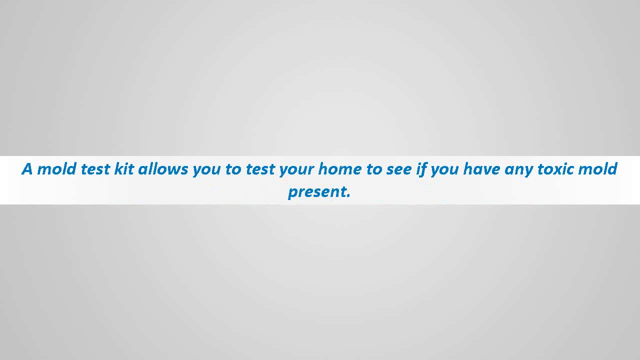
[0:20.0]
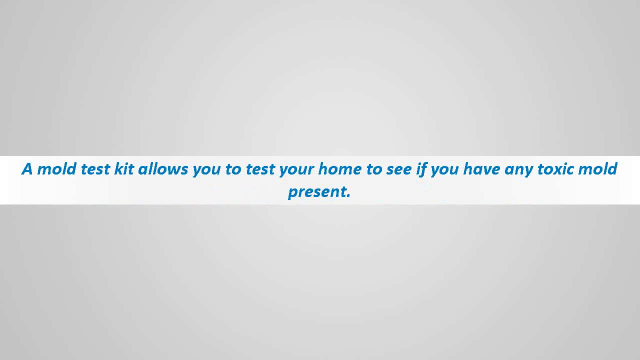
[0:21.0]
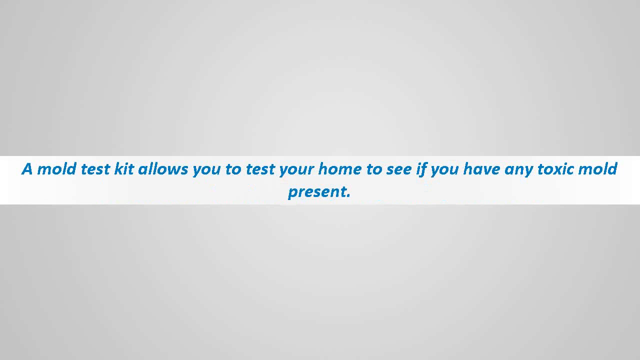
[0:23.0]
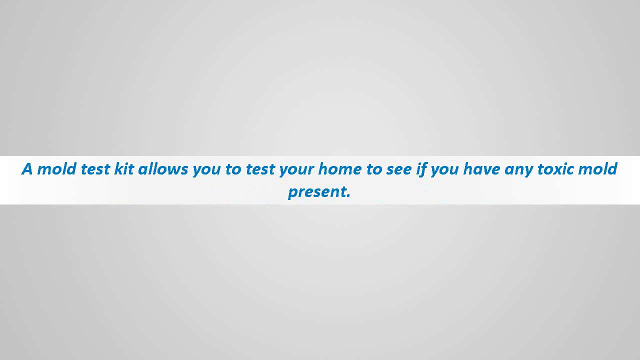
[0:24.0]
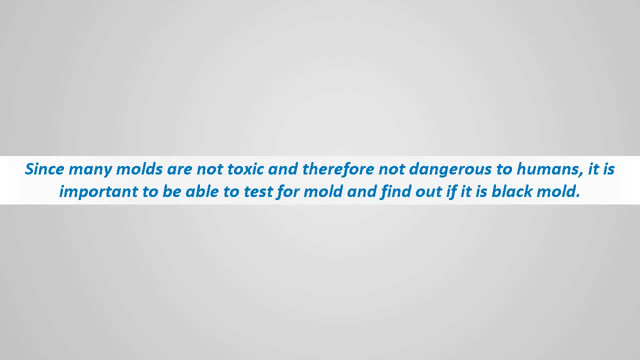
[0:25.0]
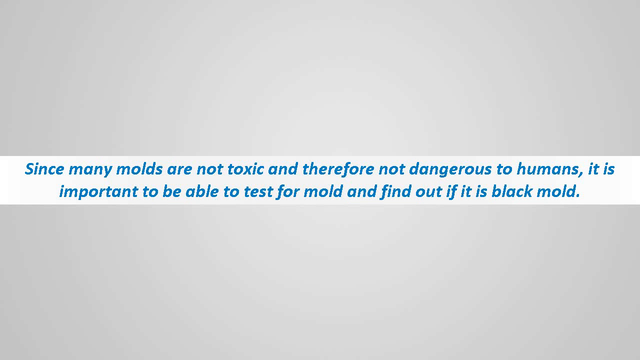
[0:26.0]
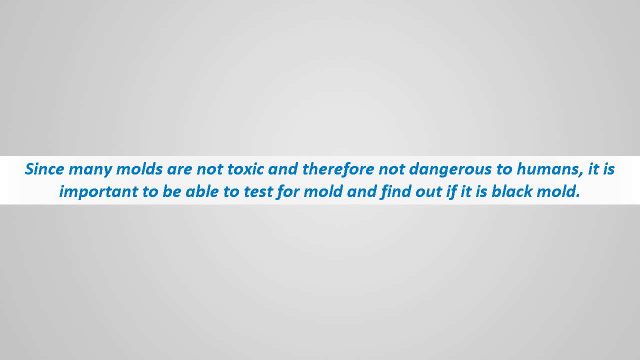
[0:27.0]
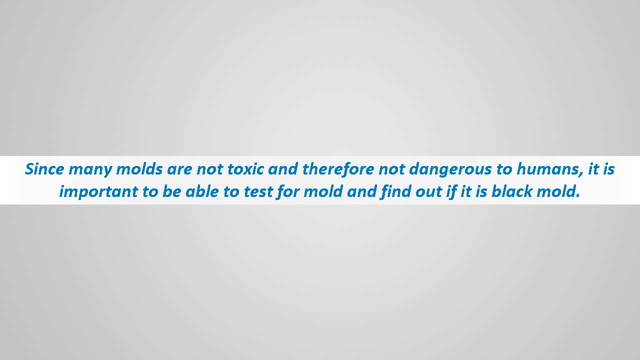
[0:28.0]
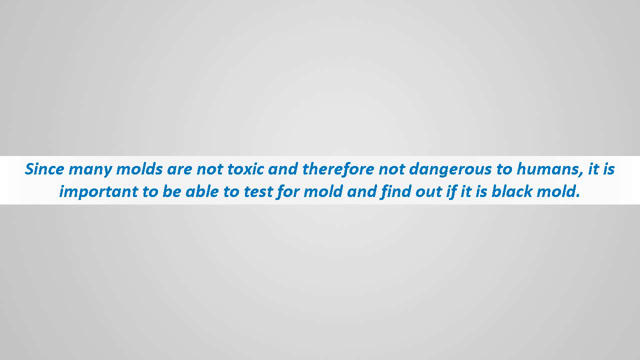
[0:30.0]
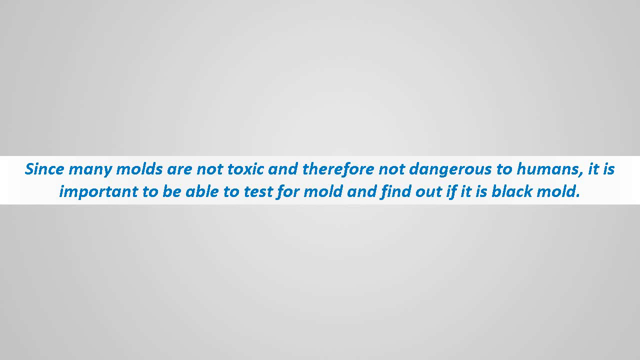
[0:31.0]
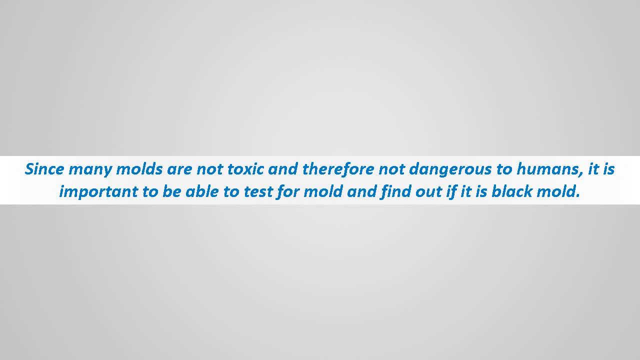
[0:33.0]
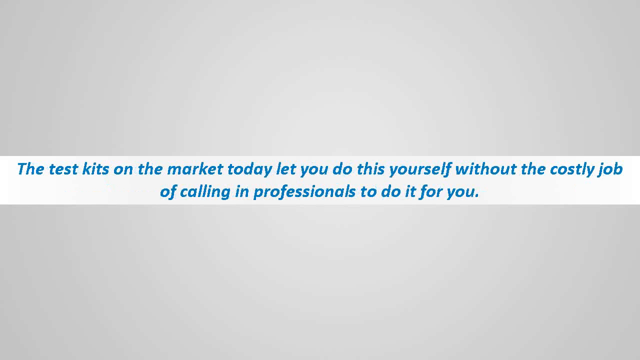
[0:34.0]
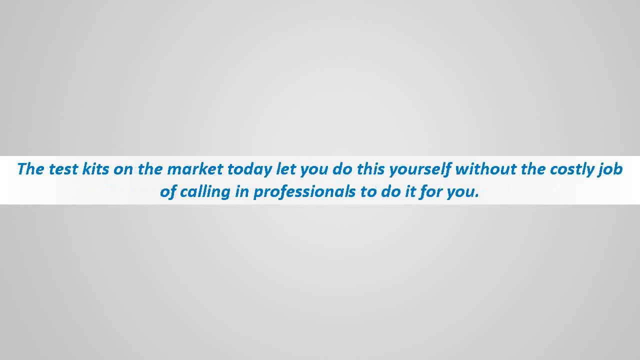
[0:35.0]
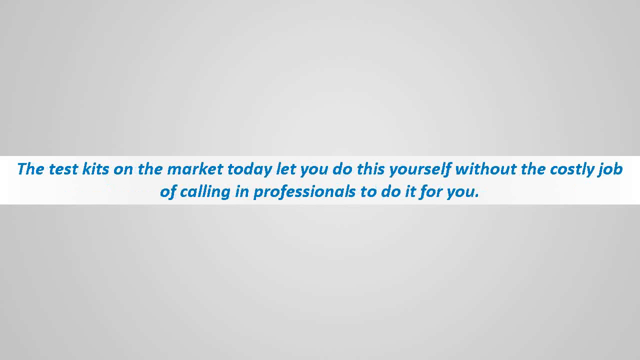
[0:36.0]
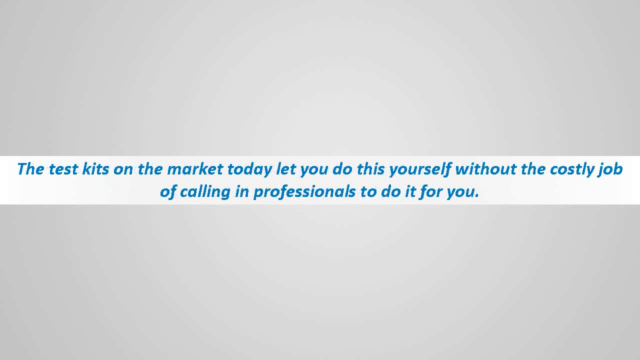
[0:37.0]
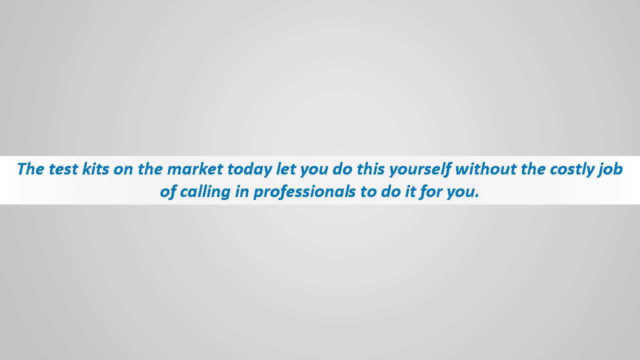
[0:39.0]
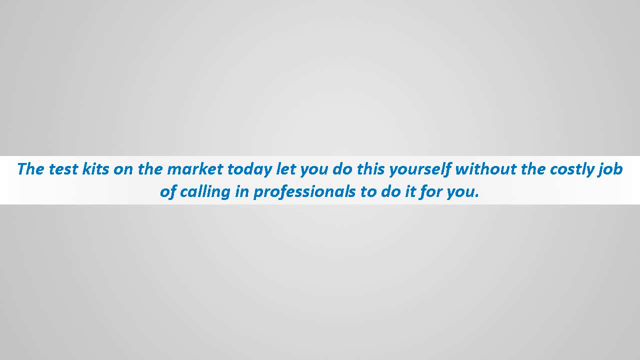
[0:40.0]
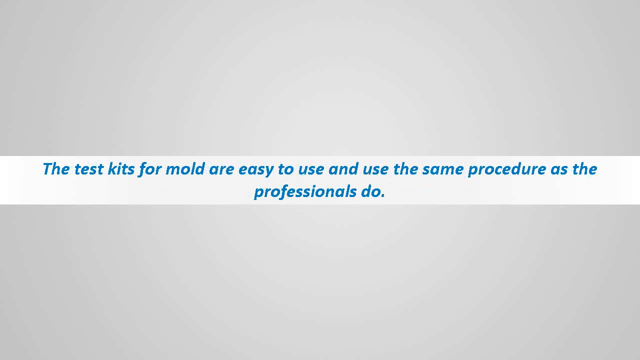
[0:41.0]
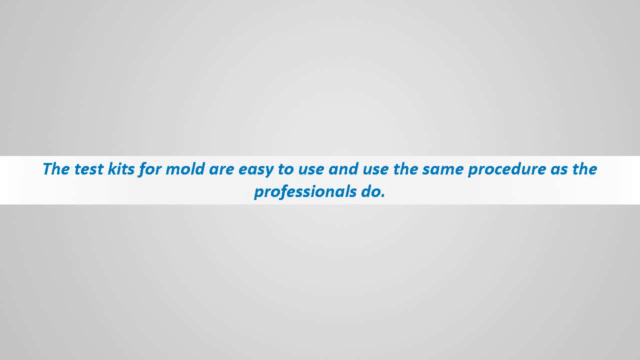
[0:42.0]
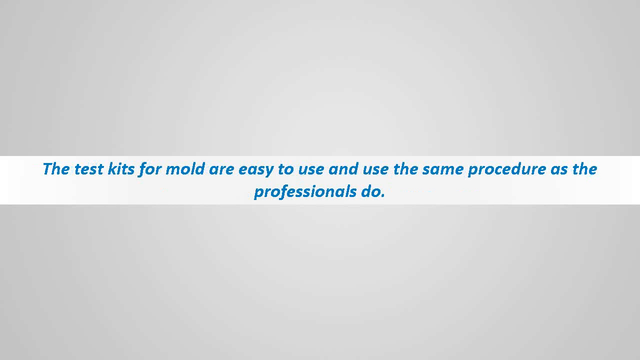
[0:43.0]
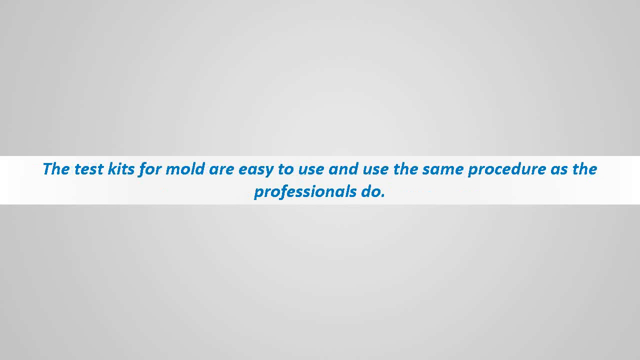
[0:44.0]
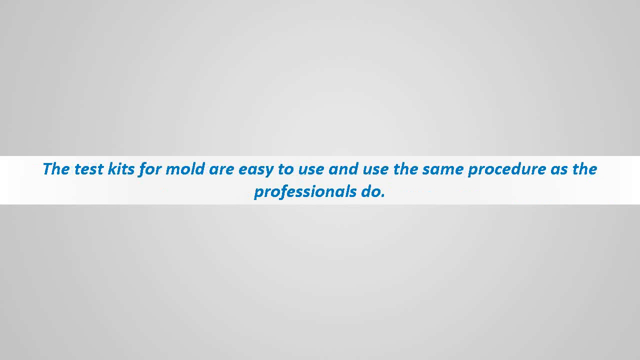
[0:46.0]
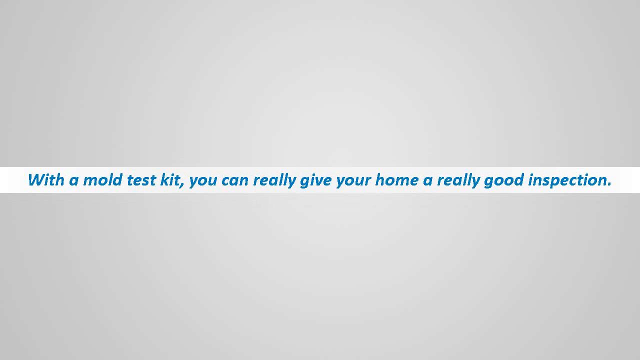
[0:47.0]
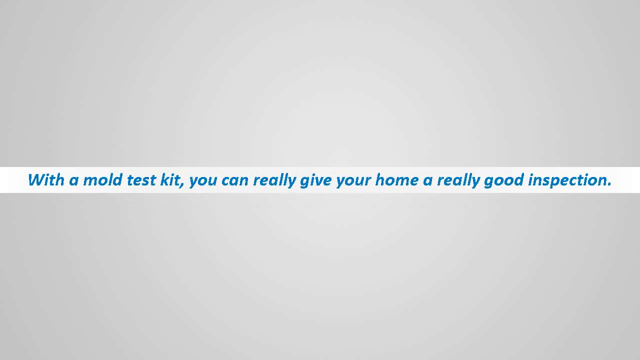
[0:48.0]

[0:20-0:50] A gray background has a white strip in the middle, with blue text reading "A mold test kit allows you to test your home to see if you have any toxic mold present." About three or four seconds later, more blue text appears in the same white strip in the middle of the screen: "Since many molds are not toxic and therefore not dangerous to humans, it is important to be able to test for mold to find out if it is black mold."